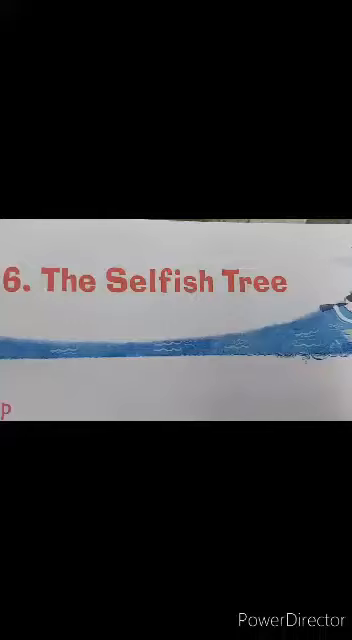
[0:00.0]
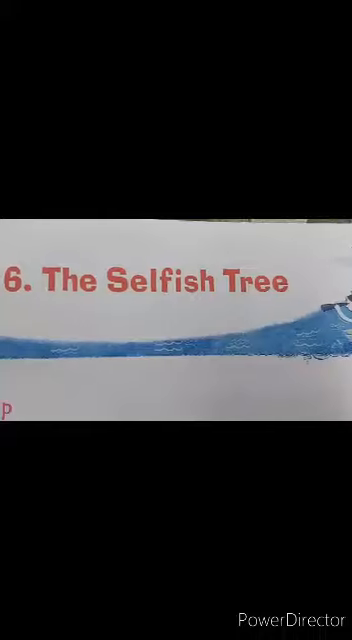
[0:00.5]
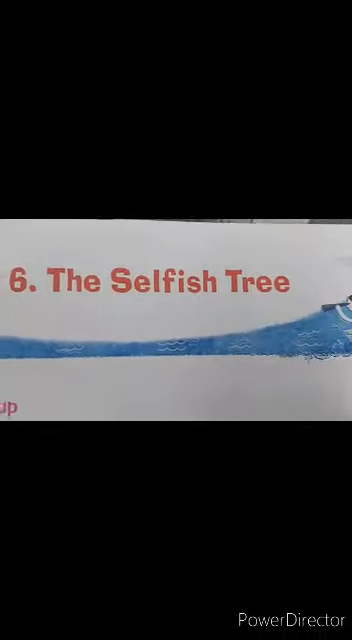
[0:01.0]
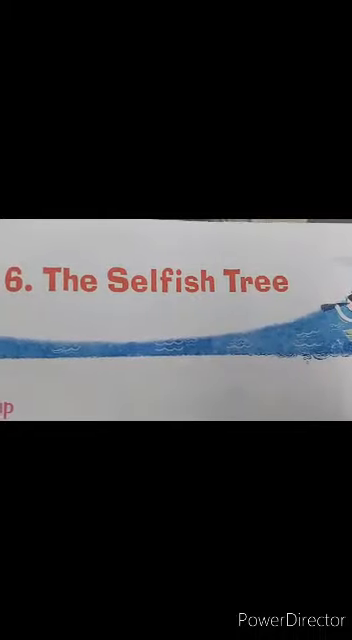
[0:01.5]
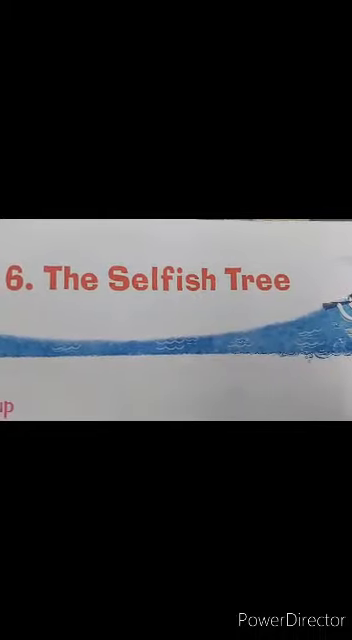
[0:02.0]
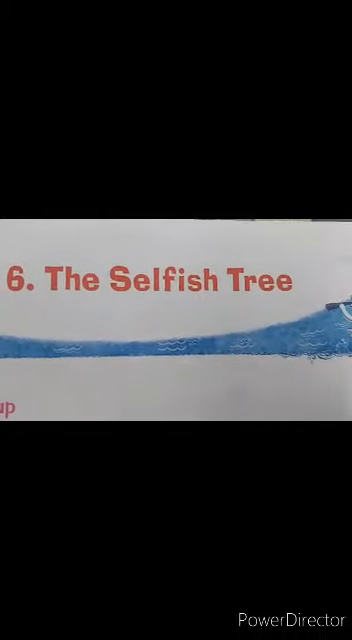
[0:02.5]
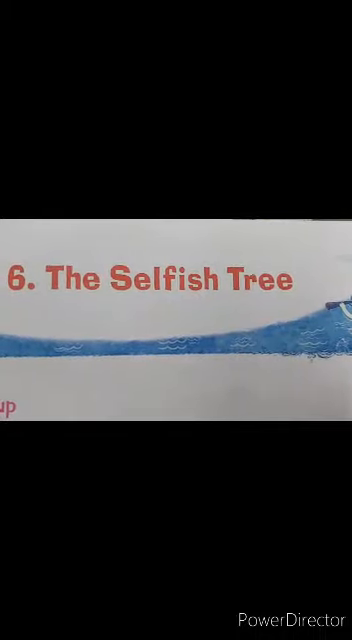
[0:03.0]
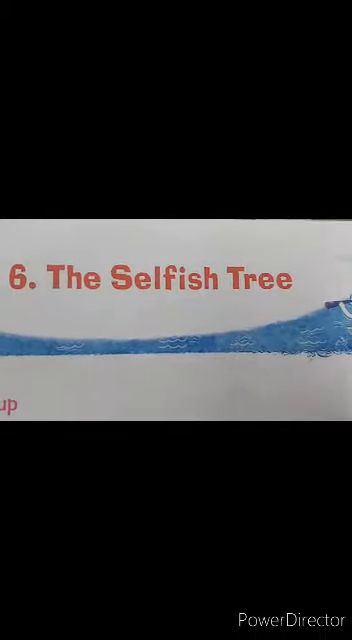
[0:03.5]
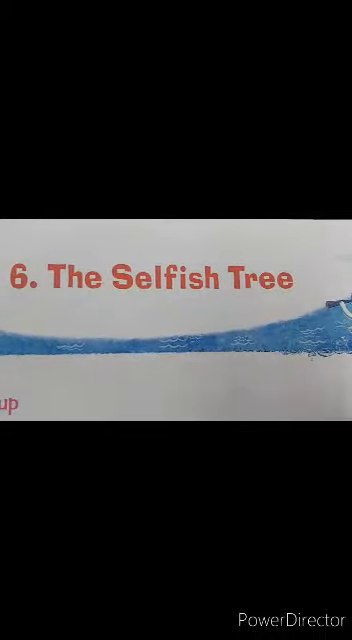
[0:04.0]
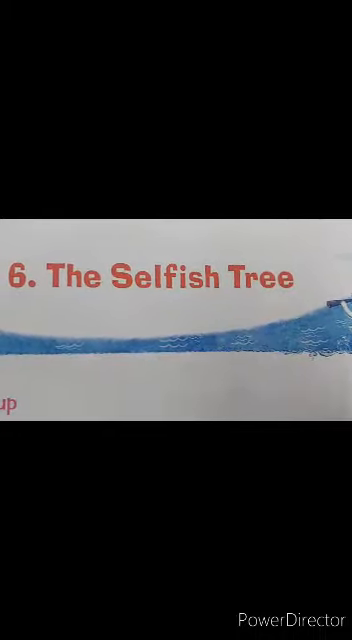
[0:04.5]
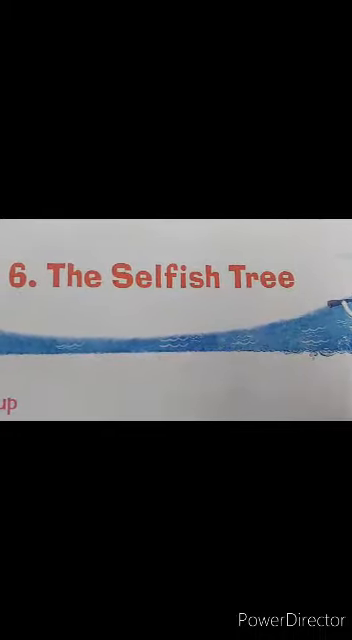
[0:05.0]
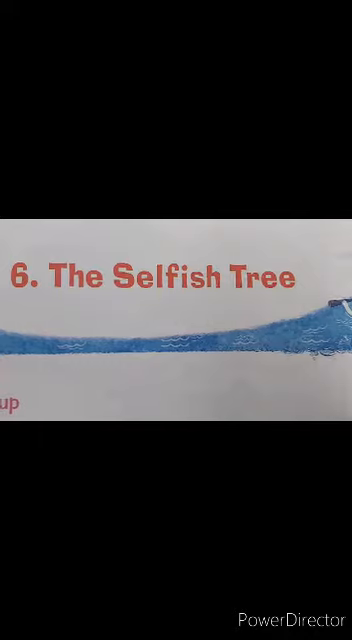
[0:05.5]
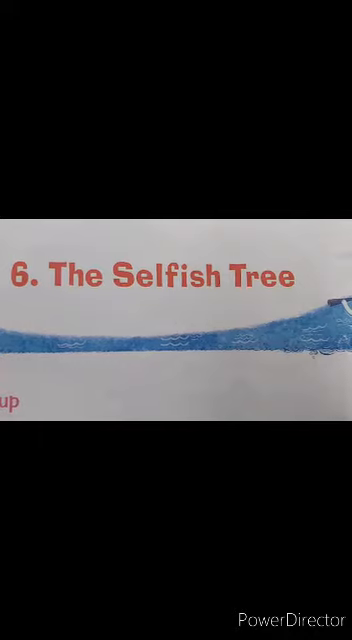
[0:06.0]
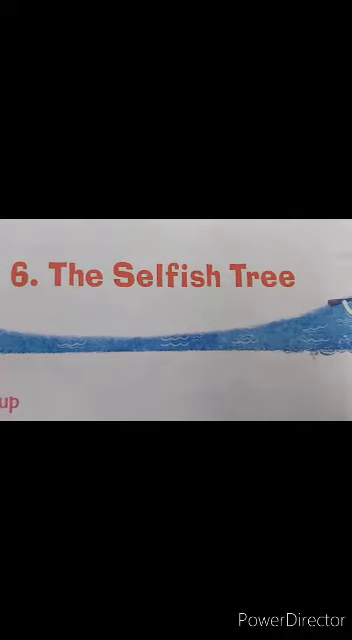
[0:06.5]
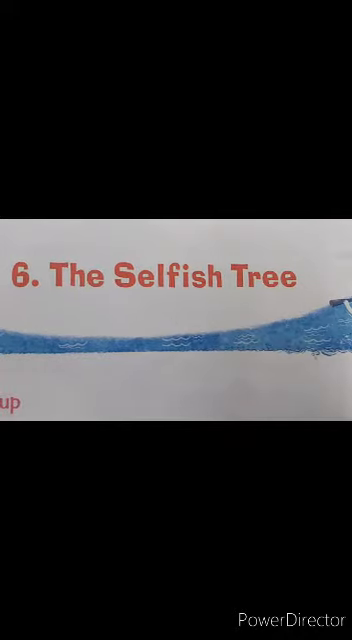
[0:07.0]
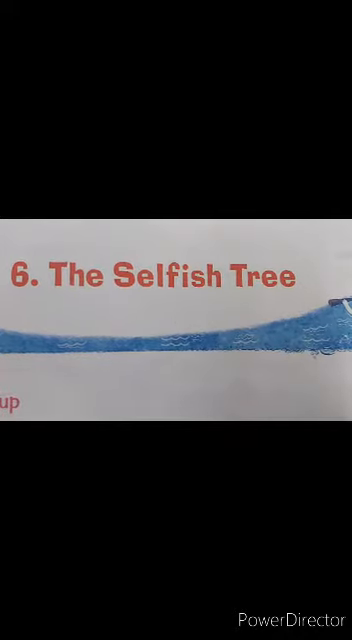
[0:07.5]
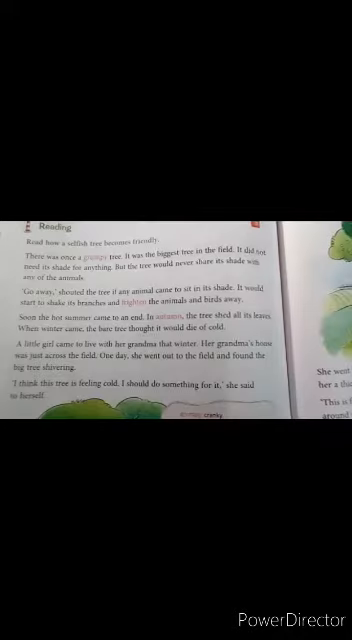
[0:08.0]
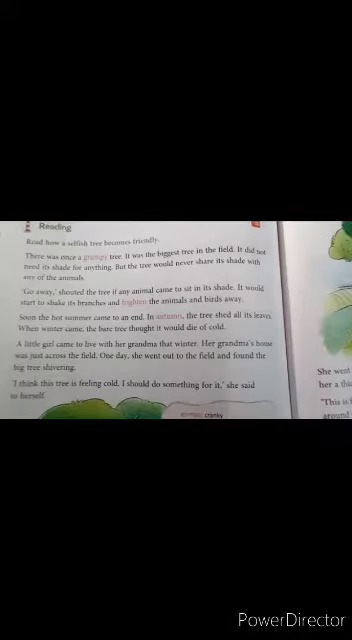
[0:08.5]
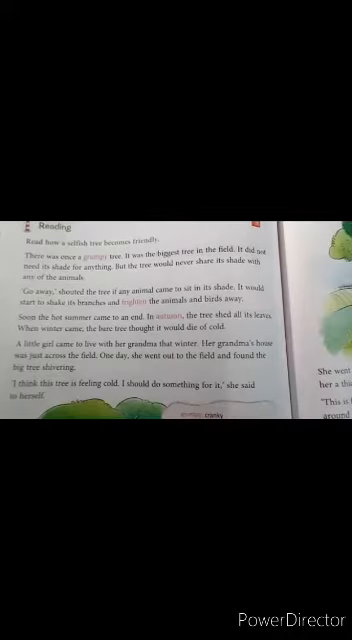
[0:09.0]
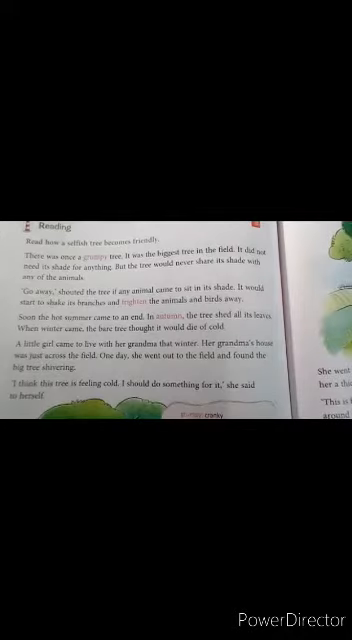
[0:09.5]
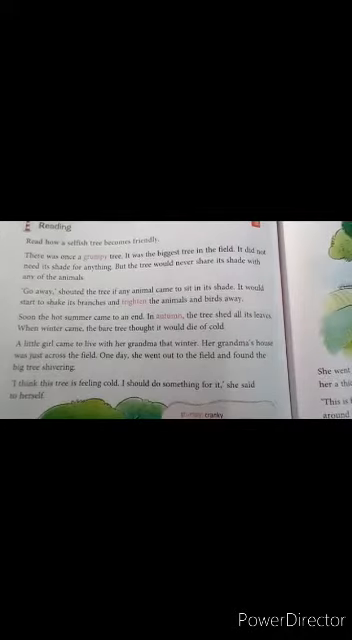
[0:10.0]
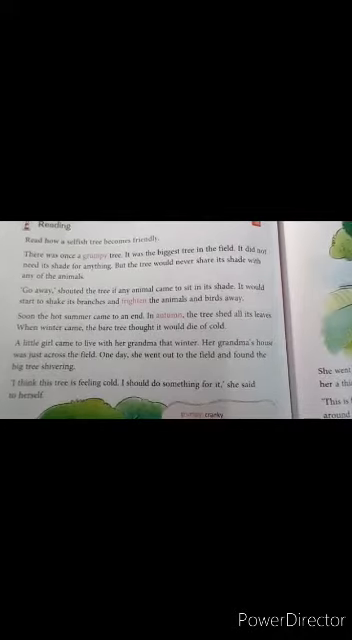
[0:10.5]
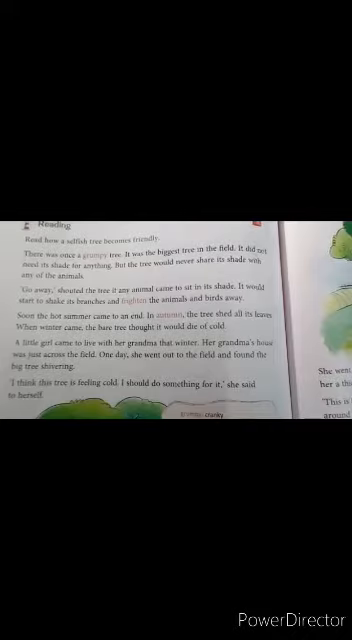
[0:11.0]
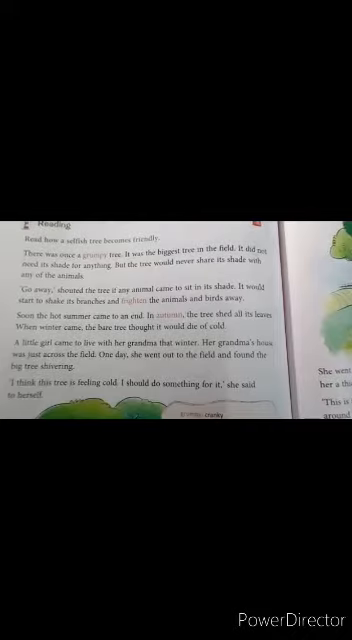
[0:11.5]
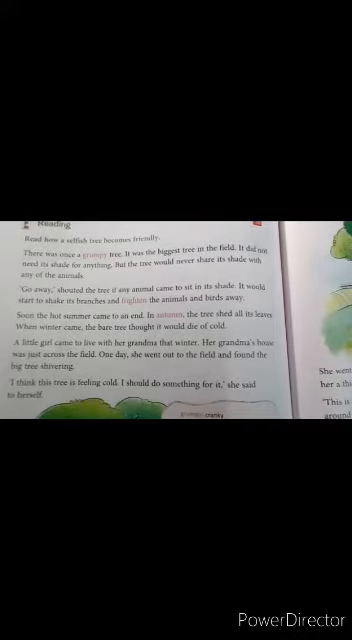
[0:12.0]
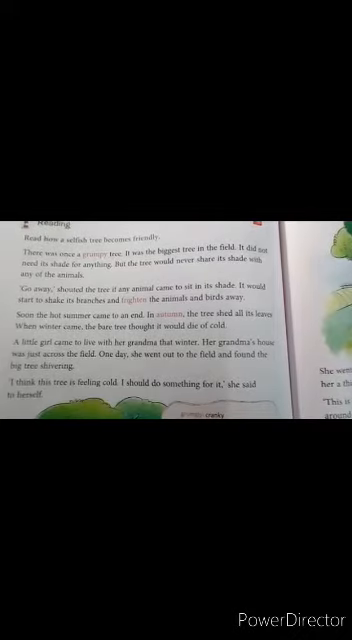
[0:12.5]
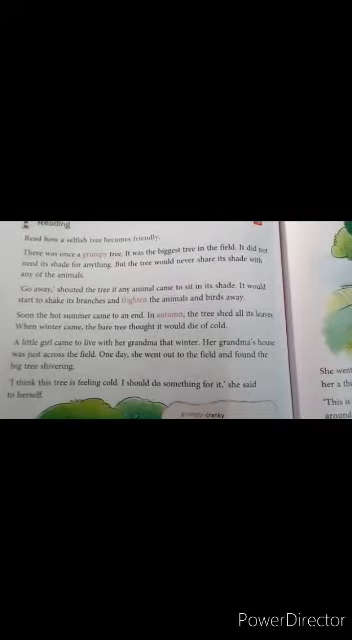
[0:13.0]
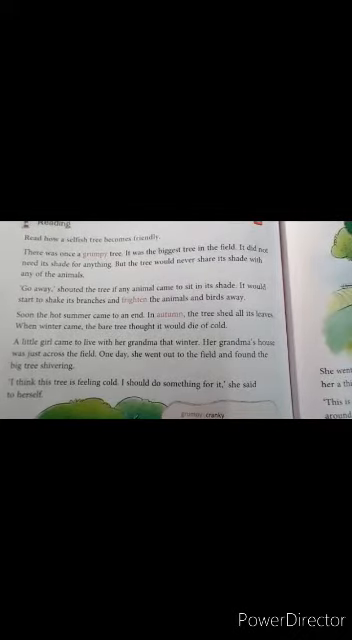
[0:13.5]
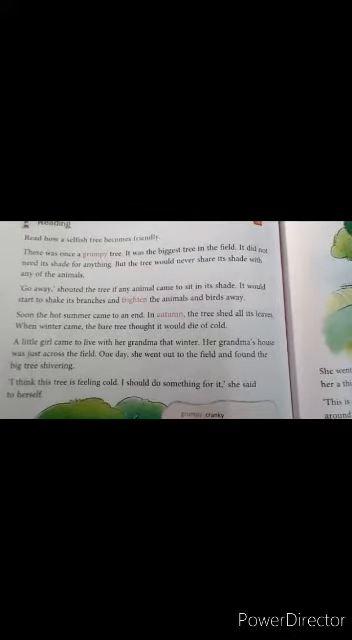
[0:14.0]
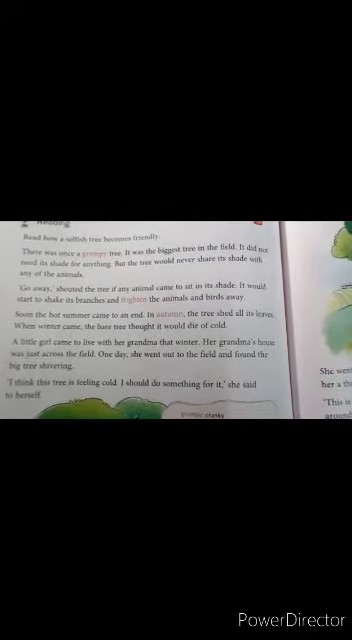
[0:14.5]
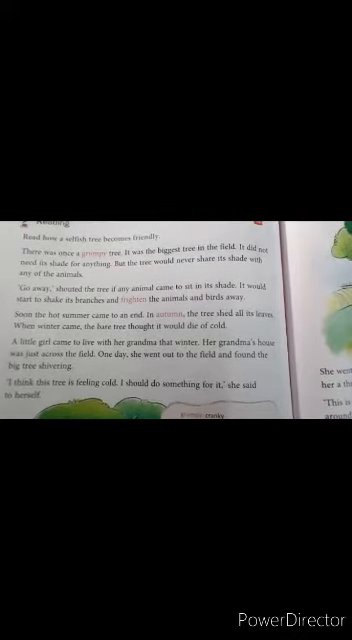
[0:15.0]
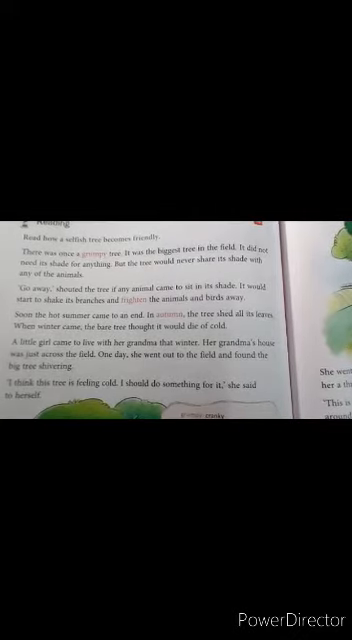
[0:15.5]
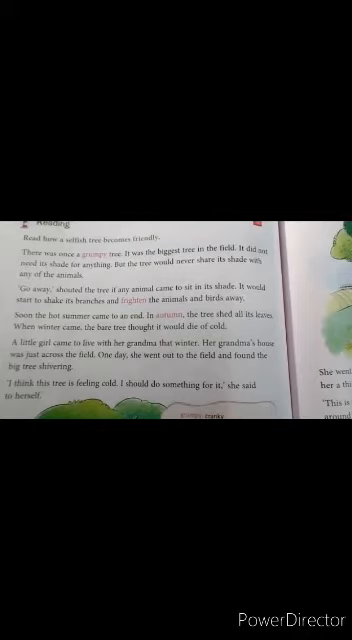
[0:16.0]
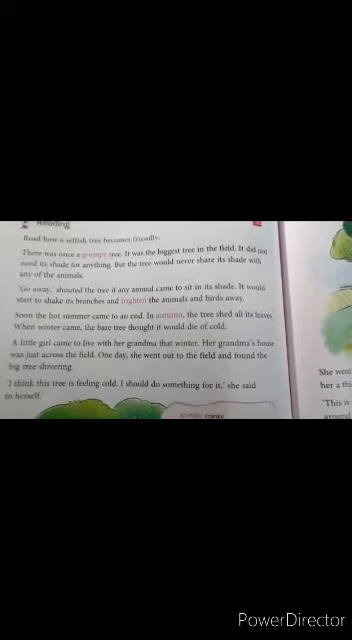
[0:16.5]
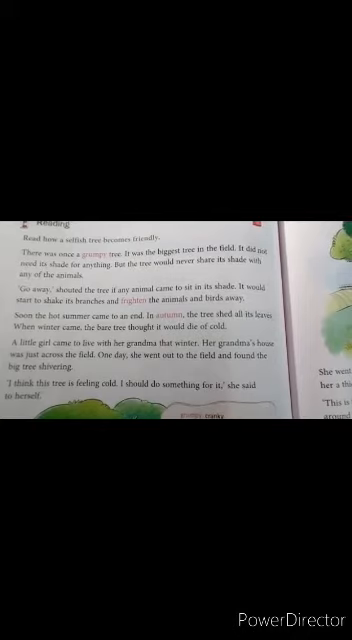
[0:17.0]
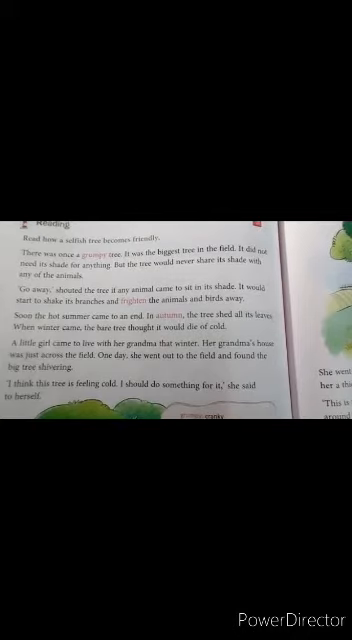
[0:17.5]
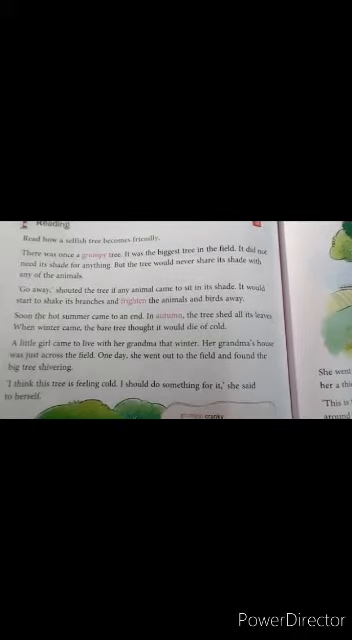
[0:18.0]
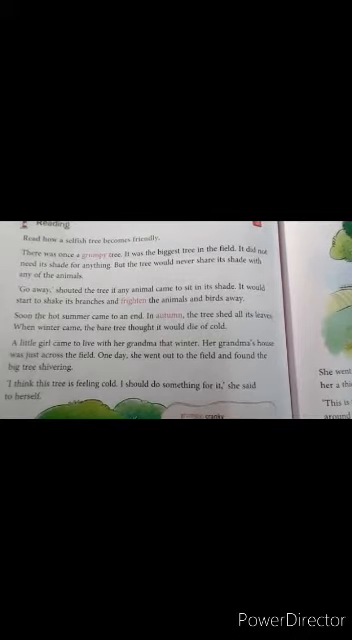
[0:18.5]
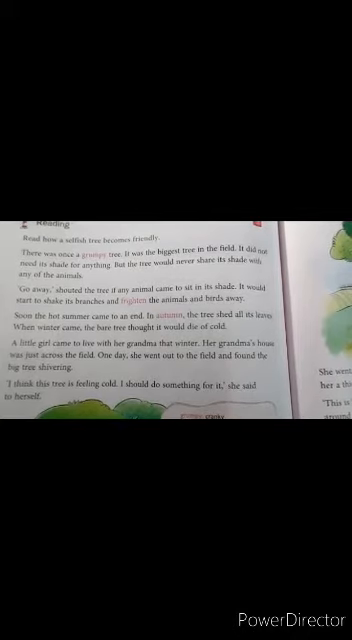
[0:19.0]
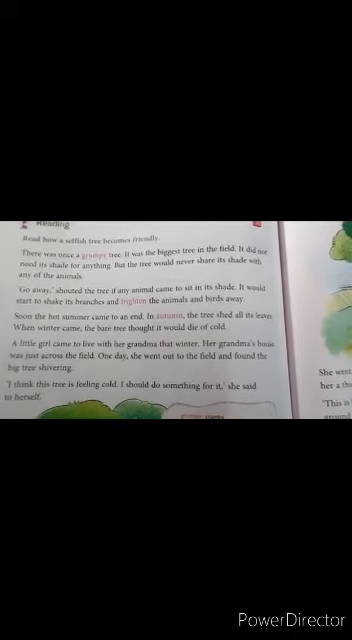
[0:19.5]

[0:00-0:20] The video opens on red letters reading "number six, the selfish tree" with a blue line underneath. A child's book then appears, opened up; someone is filming the book as it lies open before them. Most of the letters on the pages cannot be made out. In the bottom right-hand corner, in barely readable letters, a watermark reads "Power Director." It is clearly a children's book.